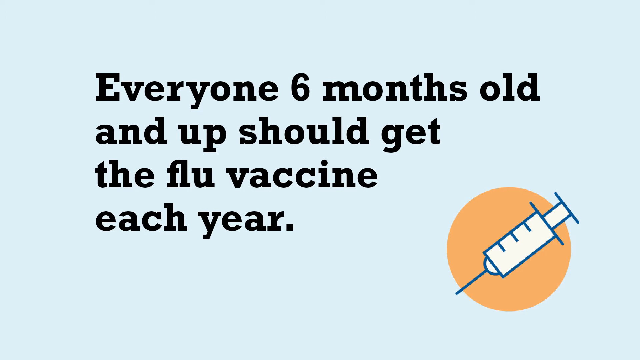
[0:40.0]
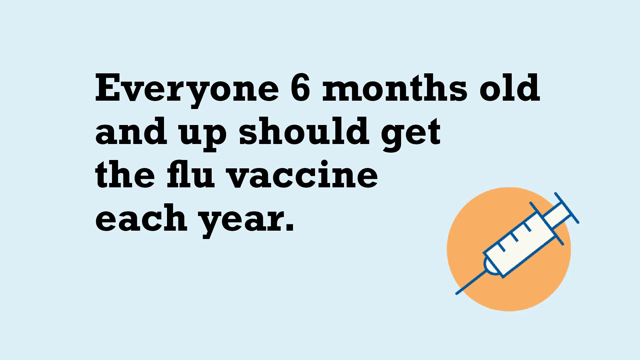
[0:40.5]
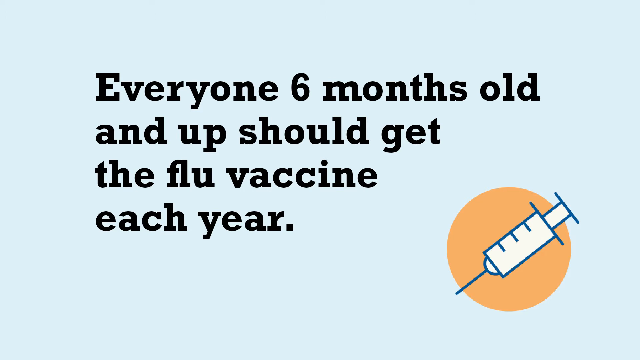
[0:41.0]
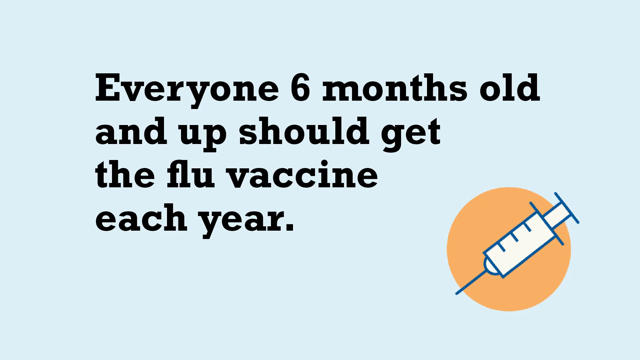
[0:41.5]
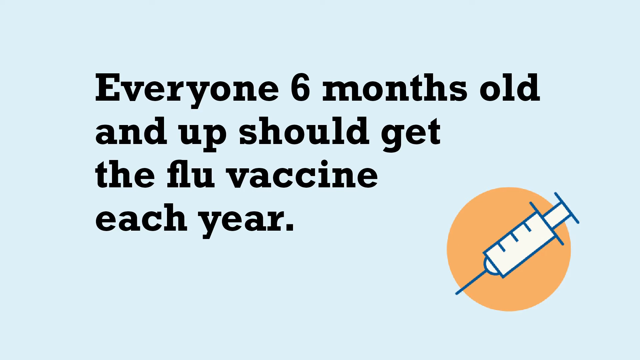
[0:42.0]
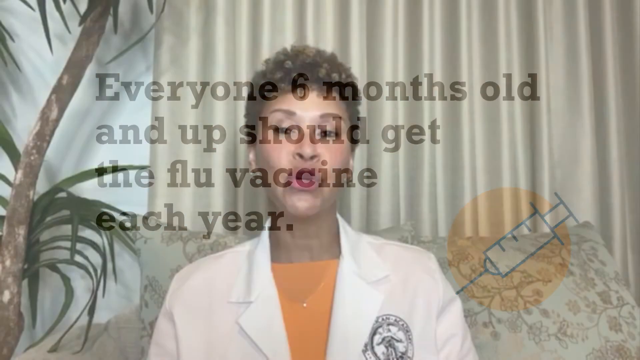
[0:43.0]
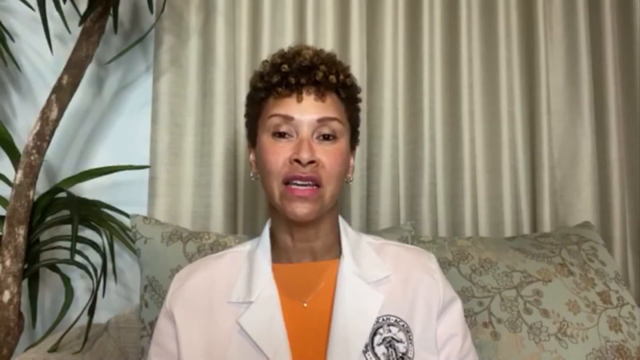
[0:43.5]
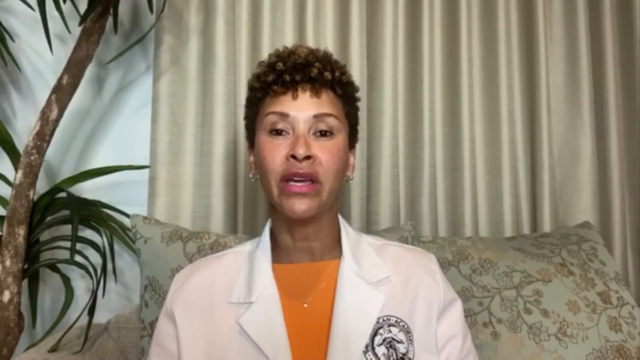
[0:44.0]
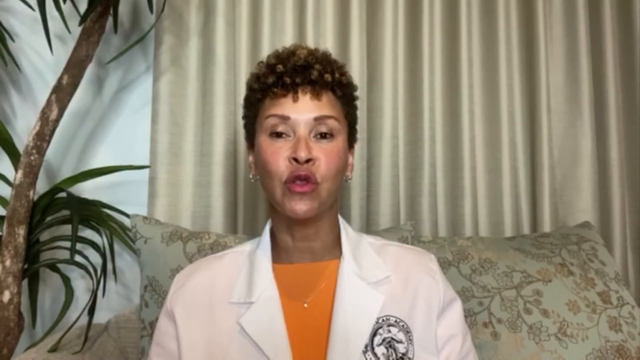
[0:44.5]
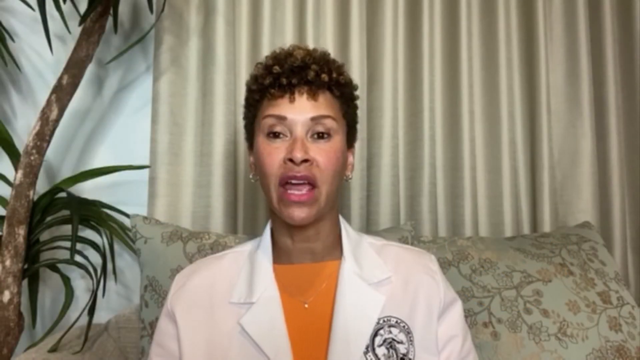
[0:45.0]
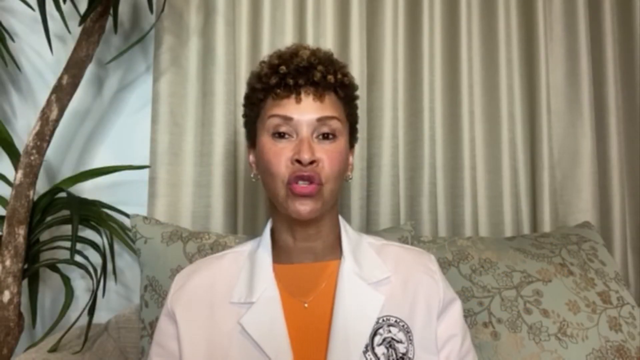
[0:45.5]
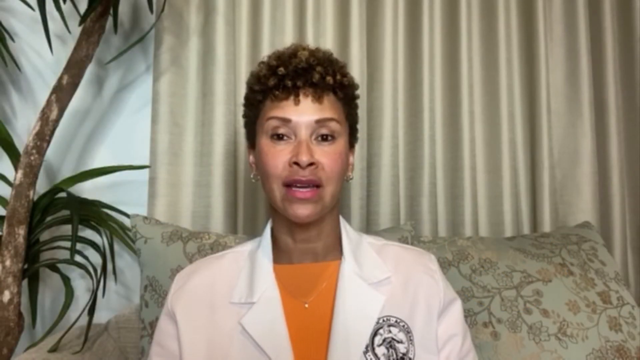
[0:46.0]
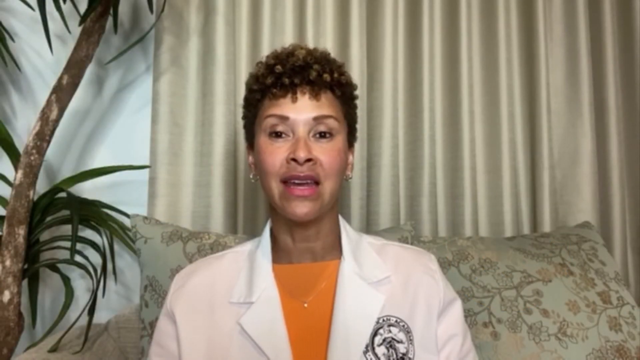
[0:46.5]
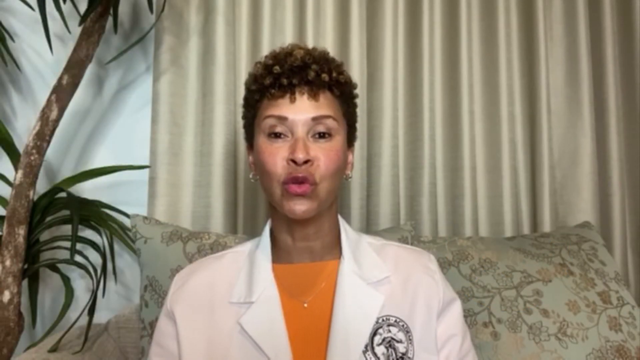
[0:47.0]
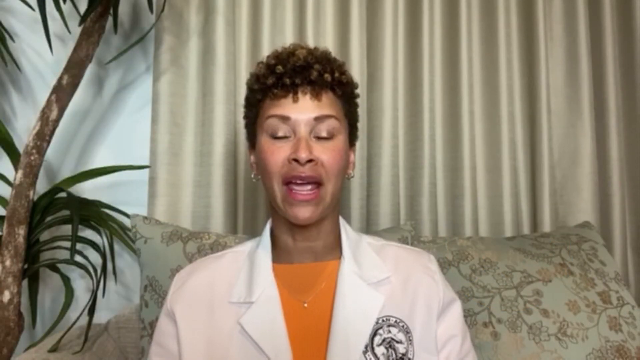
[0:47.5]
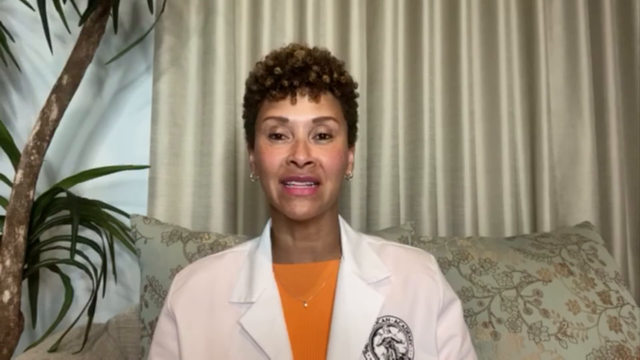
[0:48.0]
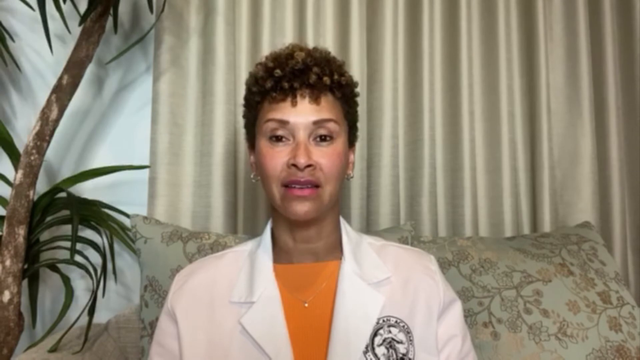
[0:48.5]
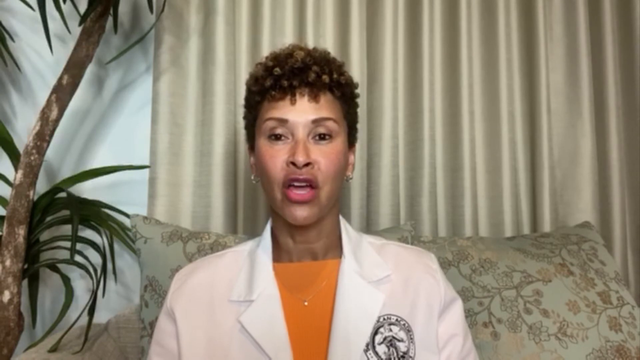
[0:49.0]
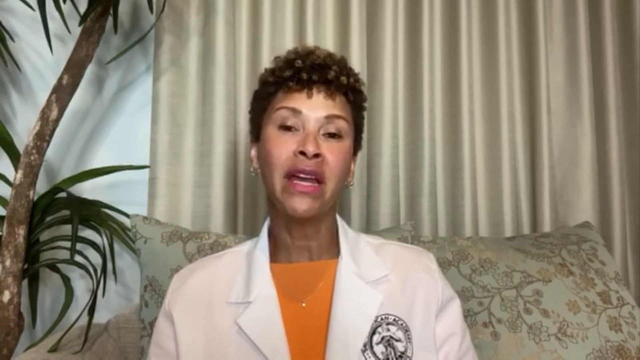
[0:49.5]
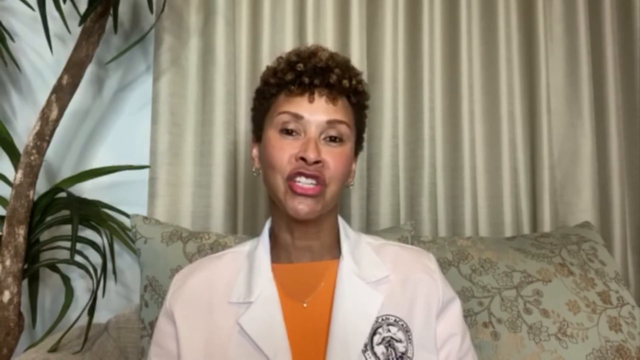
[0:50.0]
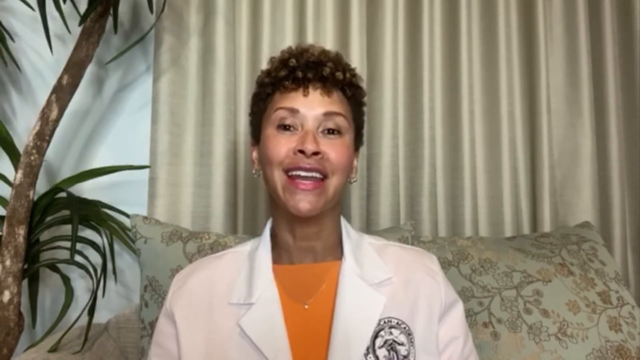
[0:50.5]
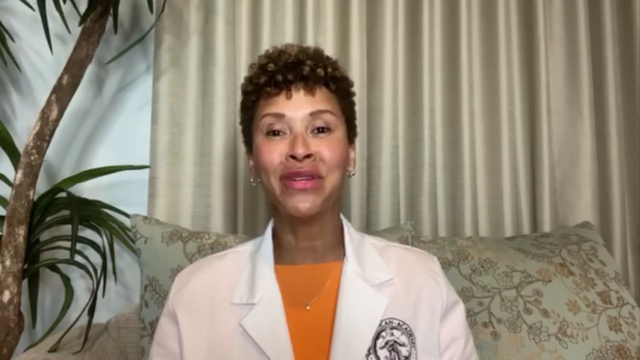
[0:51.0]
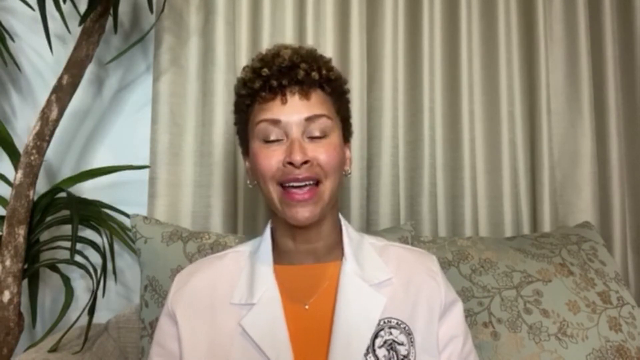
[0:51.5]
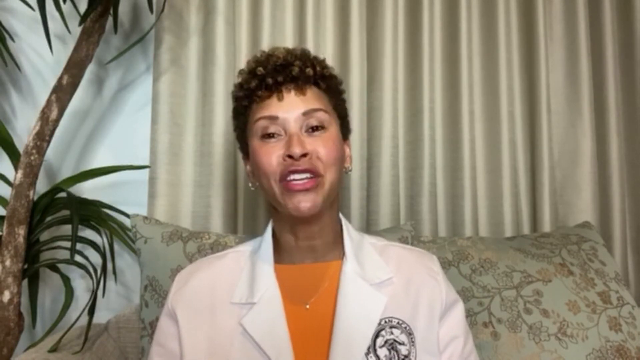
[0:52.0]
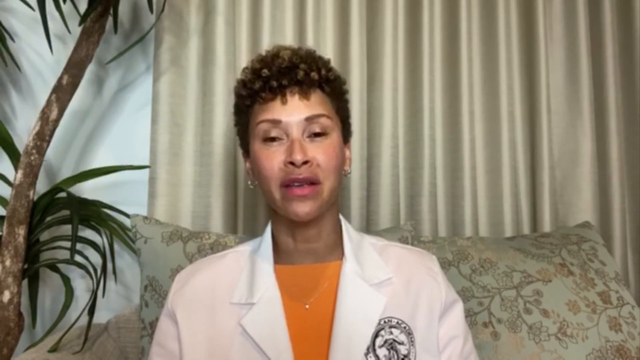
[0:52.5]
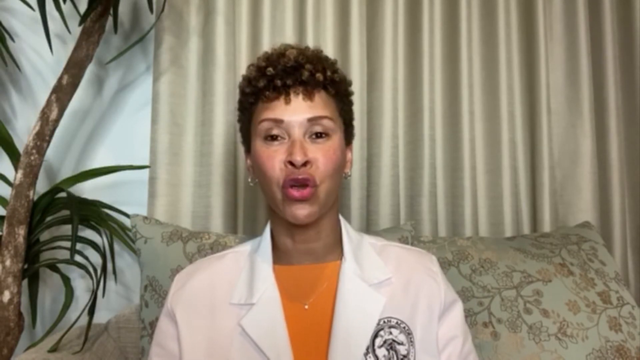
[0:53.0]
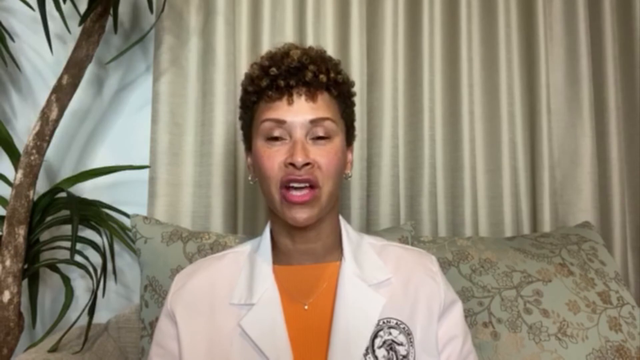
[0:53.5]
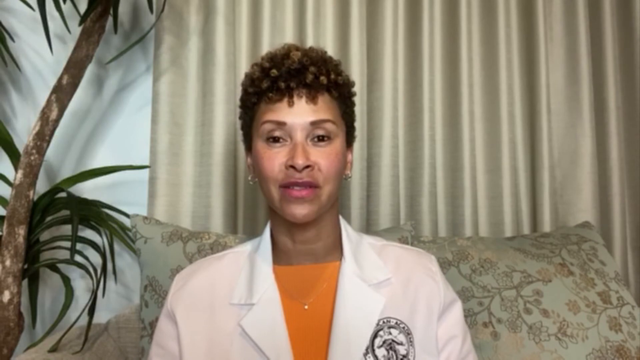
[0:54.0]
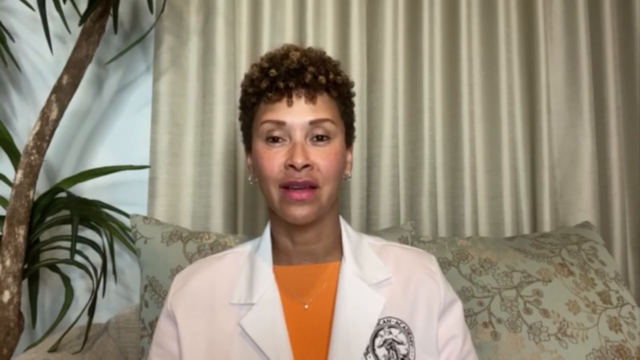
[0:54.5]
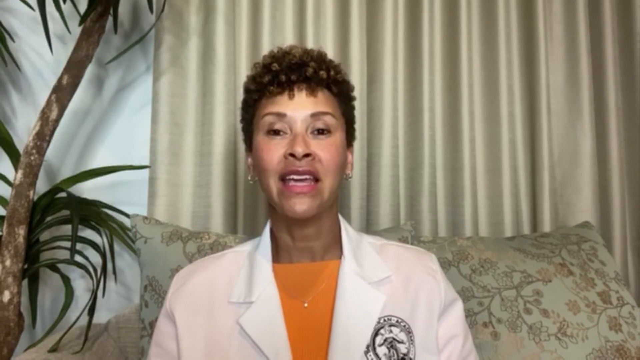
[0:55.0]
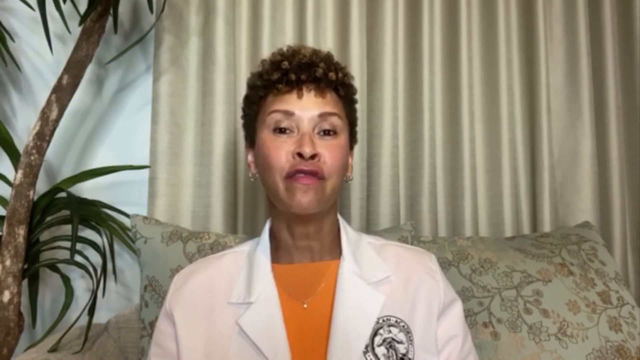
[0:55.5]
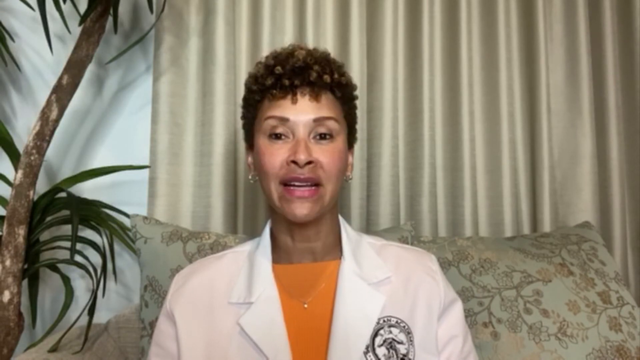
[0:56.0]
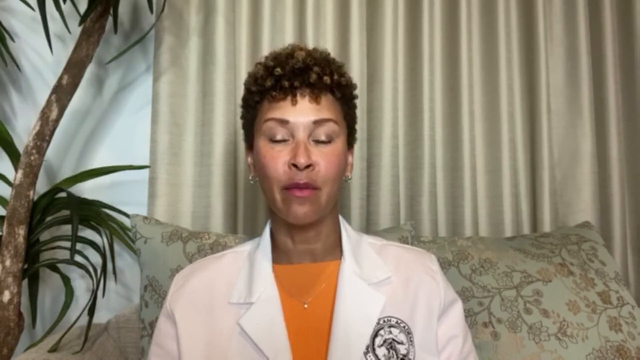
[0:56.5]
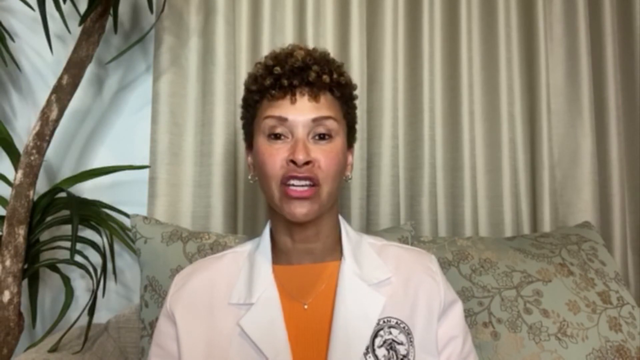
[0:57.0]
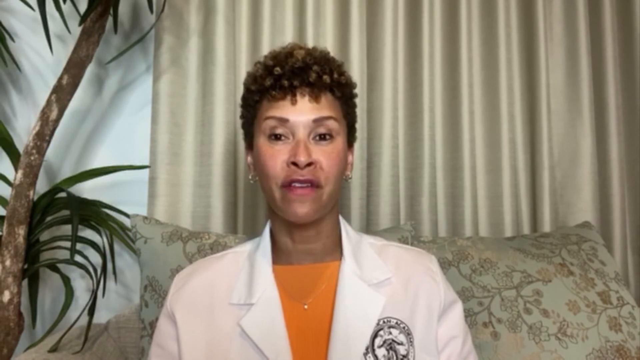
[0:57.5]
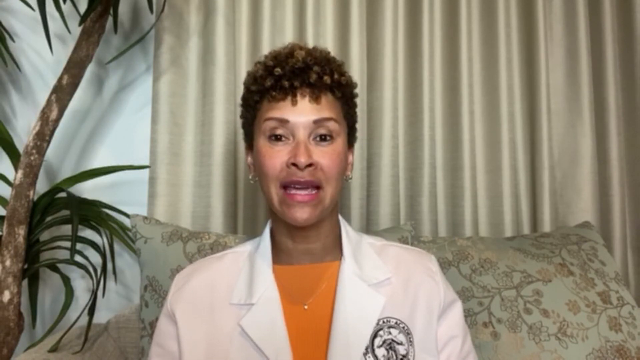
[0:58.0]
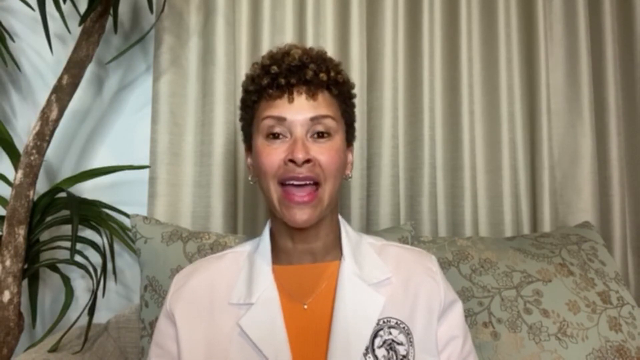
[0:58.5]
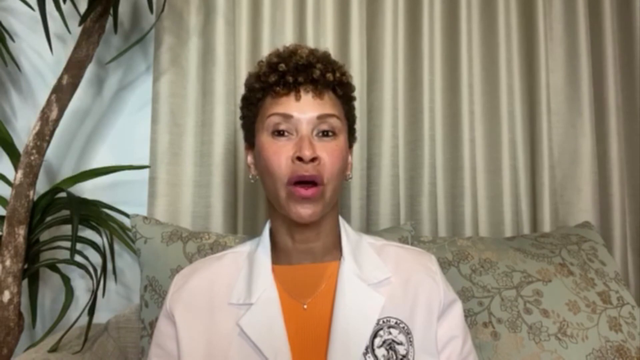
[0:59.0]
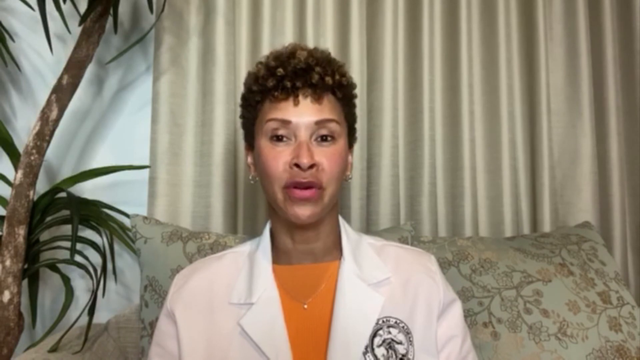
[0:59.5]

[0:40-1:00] An infographic has a light gray-blue background with centered black text that says "everyone six months old and up should get the flu vaccine each year." In the bottom right corner is a light orange circle containing a drawn white and blue syringe outlined in blue. The syringe itself and the plunger are white, and the needle is blue; it points downward to the left and upward toward the upper right corner. The video then pans to a middle-aged African-American doctor with neat short hair. She wears short gold earrings, a small gold necklace, a light orange top and a white lab coat with a round emblem of a university or hospital system on the left lapel. Behind her are light cream tan curtains. She is seated on a light cream tan loveseat with light cream-colored pillows that have a floral tree branch pattern. To her left is an indoor palm tree with a light brown trunk and vibrant green foliage.